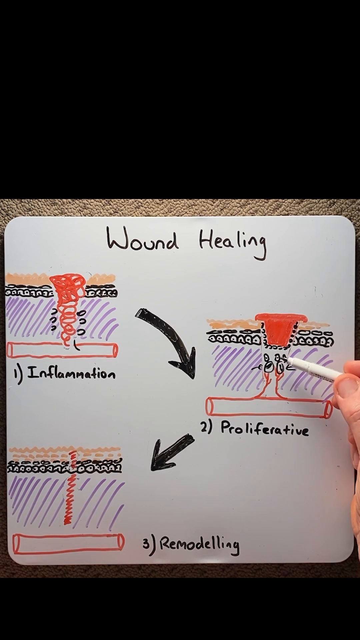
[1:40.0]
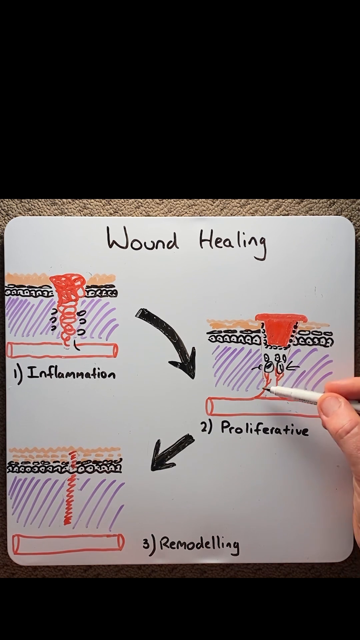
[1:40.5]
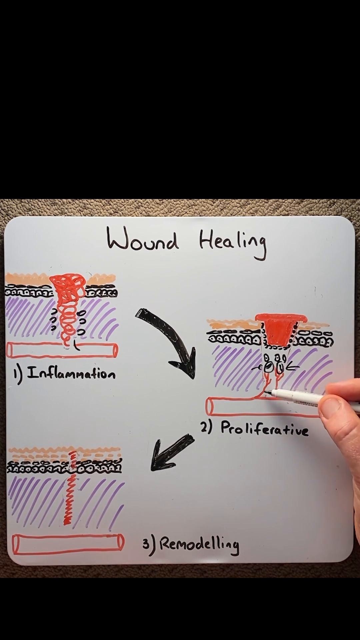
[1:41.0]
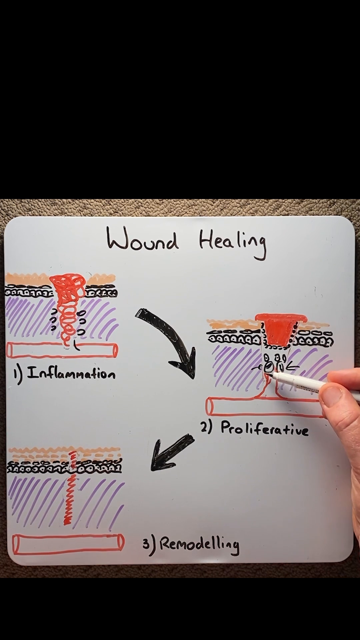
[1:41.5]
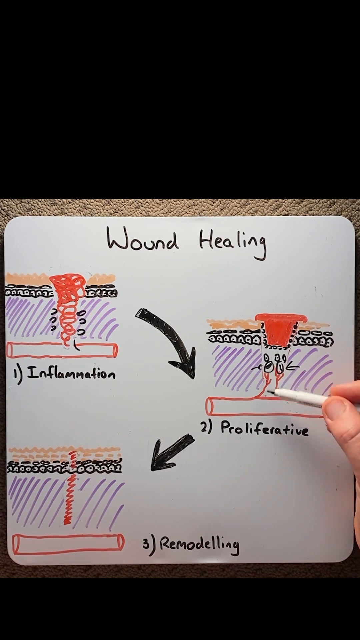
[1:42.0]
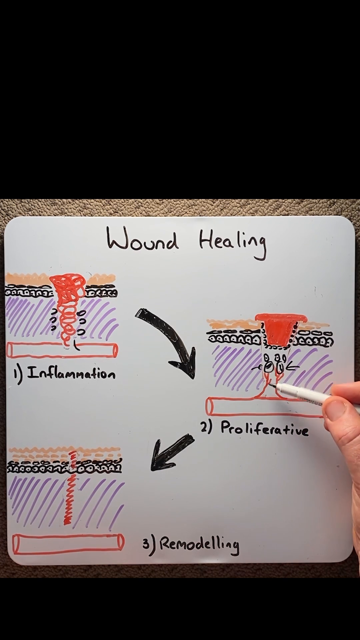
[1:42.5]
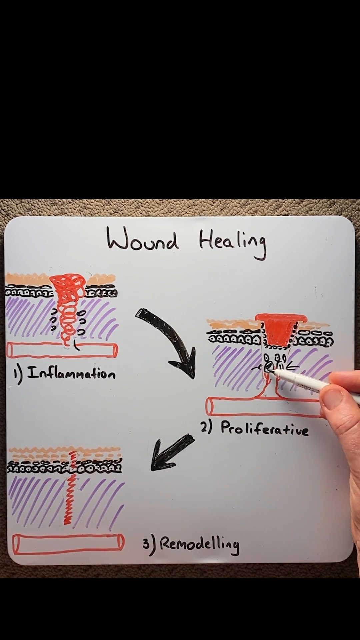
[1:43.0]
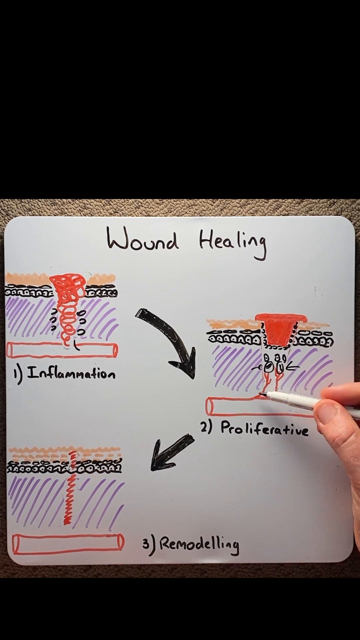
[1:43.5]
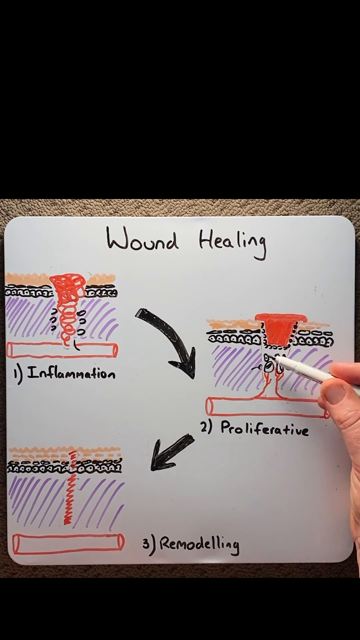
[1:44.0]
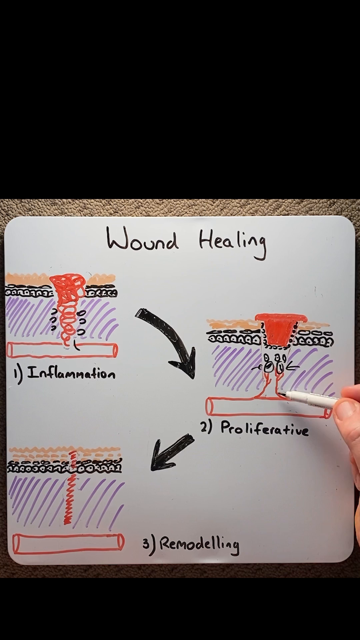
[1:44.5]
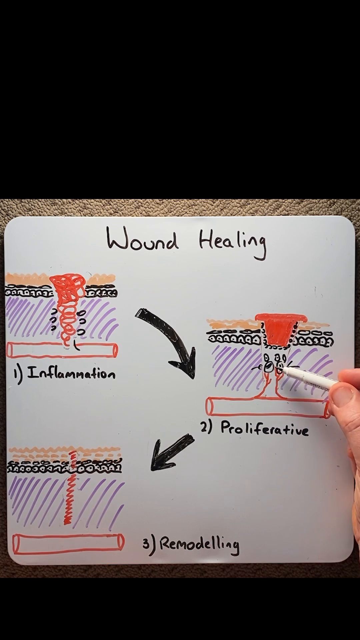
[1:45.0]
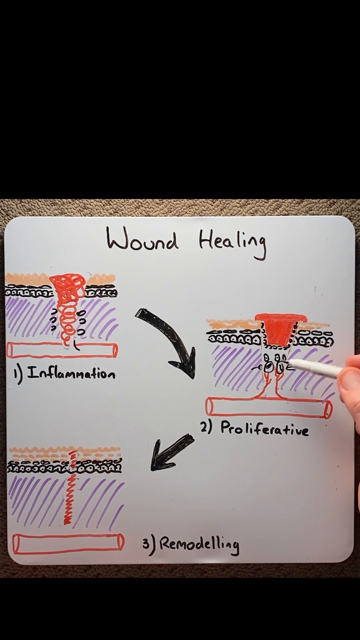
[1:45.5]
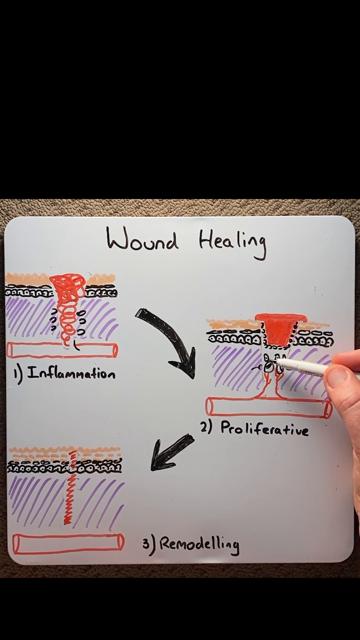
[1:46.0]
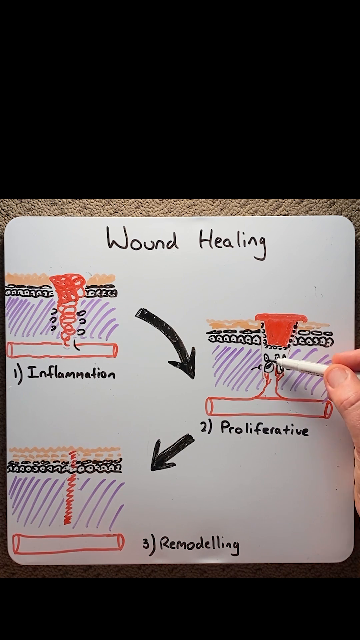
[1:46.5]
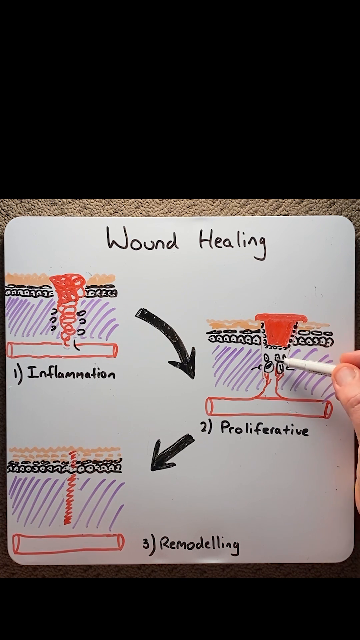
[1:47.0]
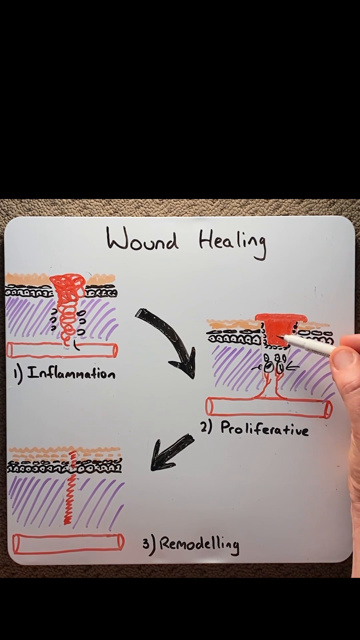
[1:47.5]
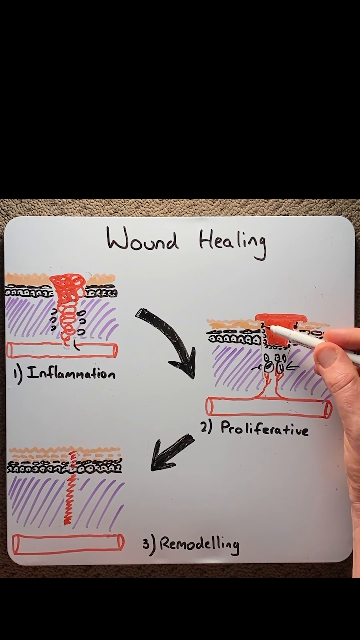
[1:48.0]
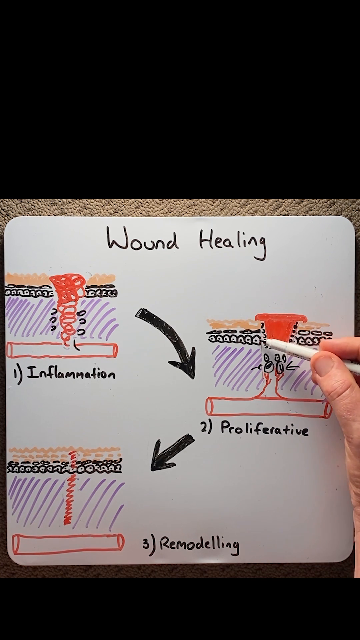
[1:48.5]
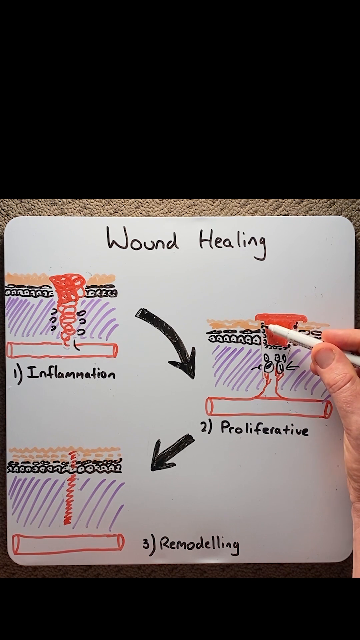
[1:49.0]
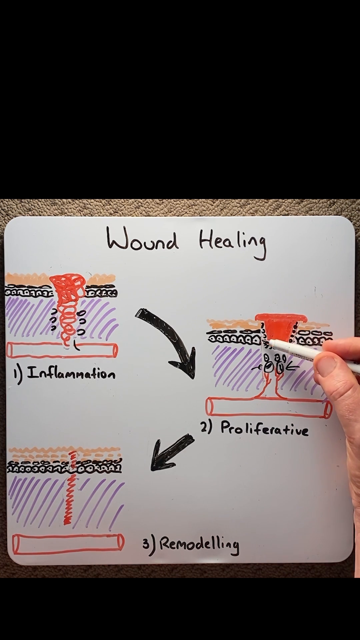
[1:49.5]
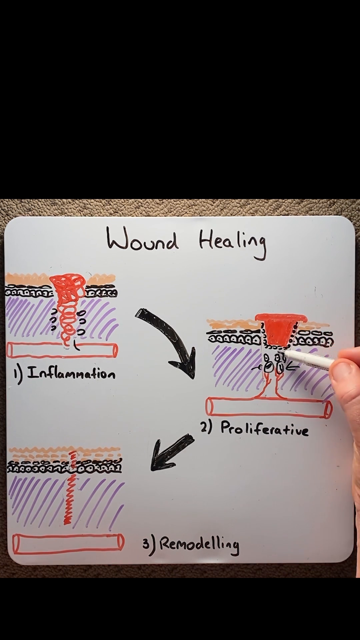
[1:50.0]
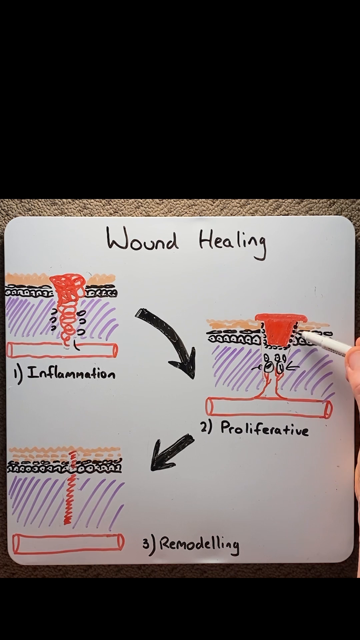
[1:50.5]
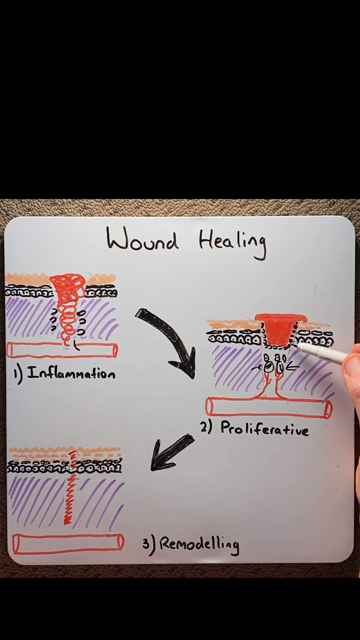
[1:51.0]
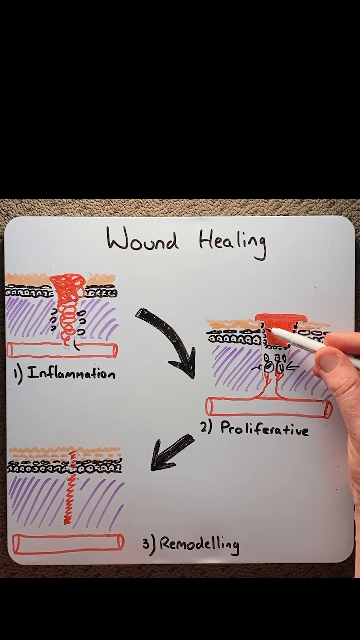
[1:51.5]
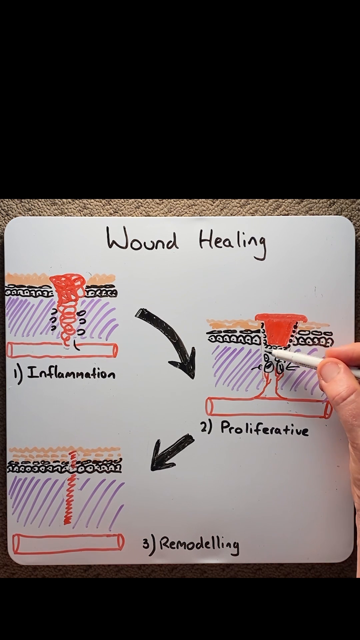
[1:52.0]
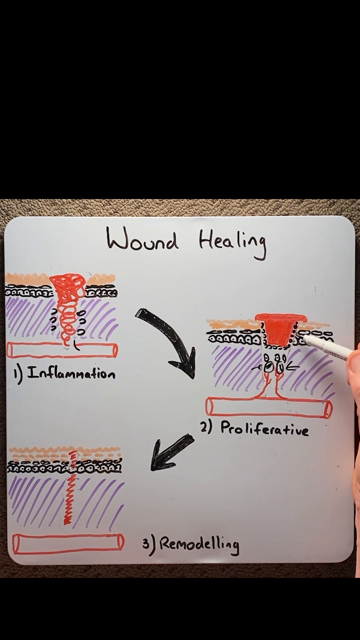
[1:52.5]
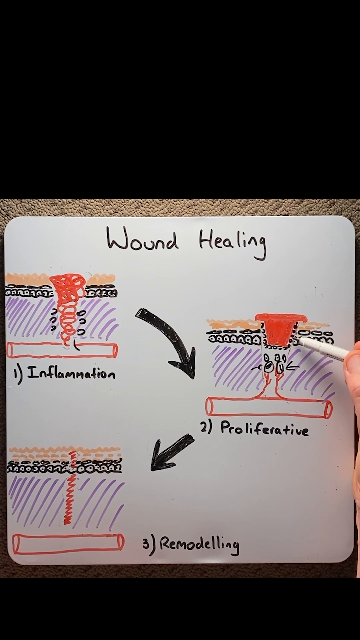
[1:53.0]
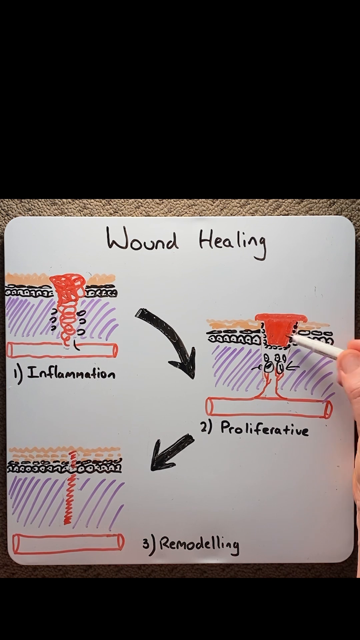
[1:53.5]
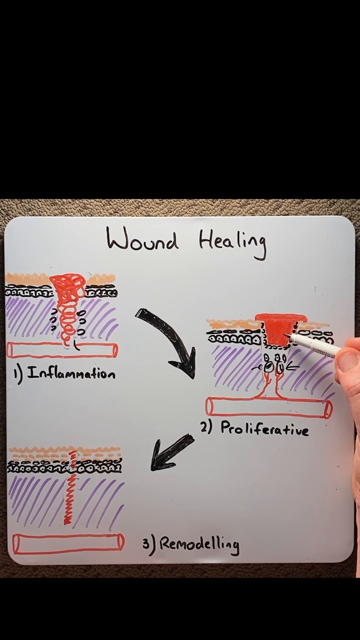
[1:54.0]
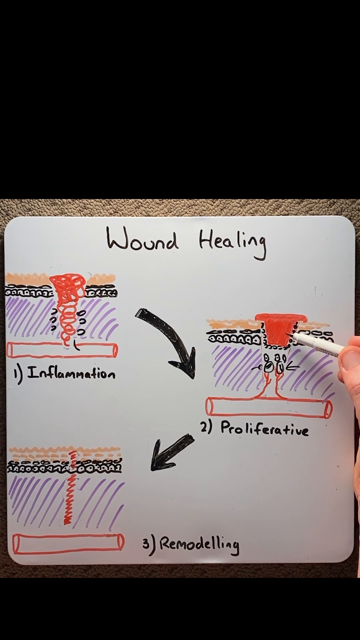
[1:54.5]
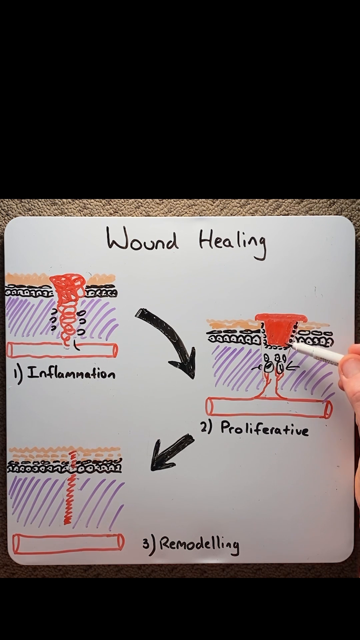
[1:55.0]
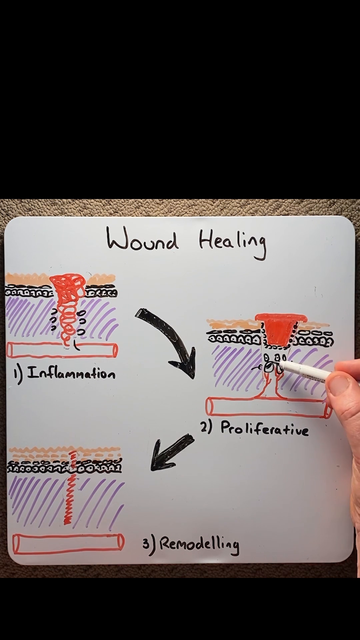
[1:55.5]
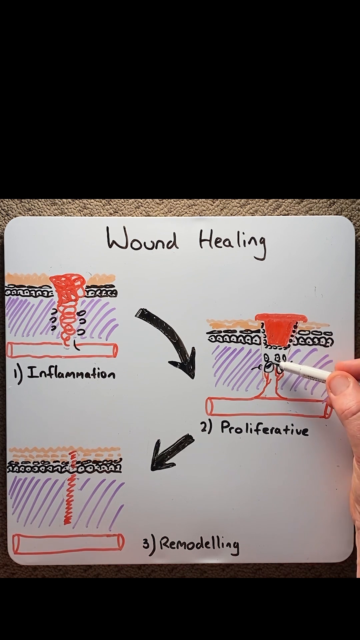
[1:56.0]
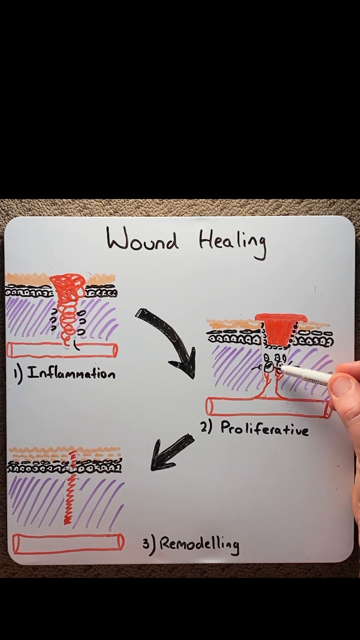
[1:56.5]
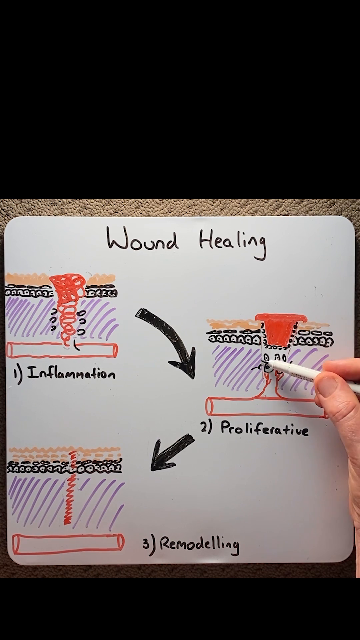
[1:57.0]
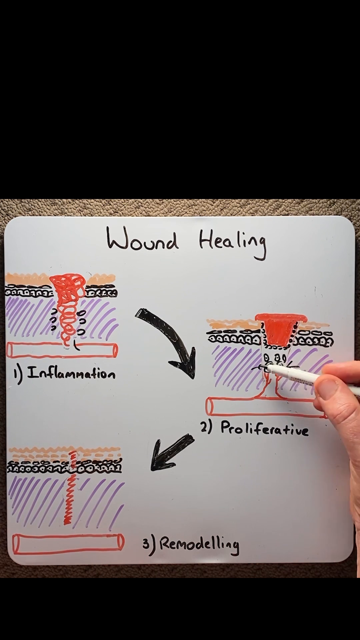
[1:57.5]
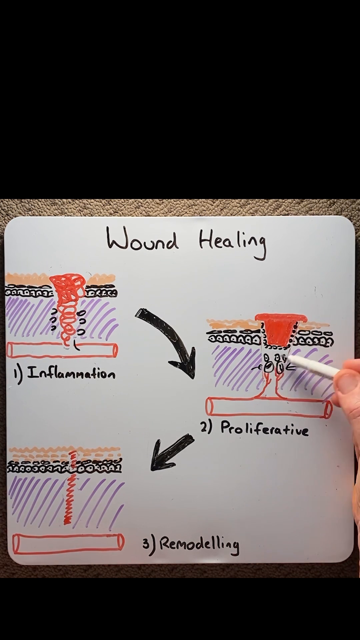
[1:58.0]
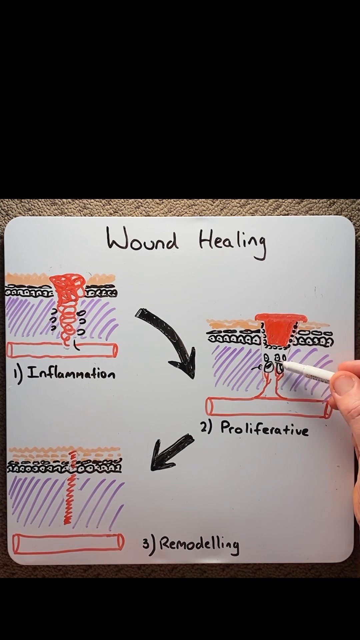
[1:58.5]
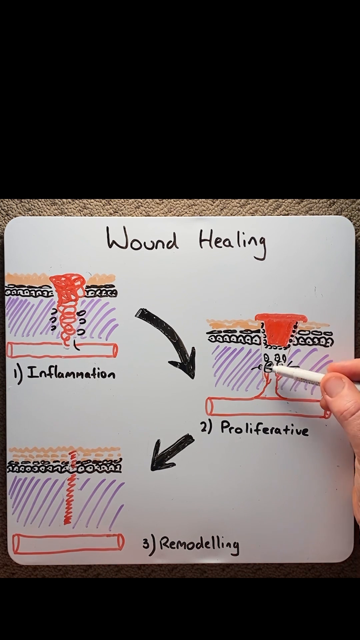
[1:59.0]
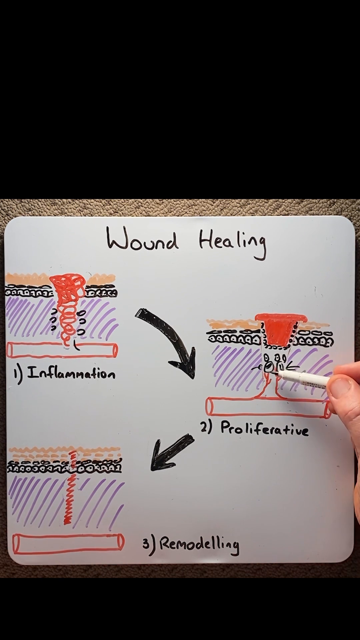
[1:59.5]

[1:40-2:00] The whiteboard explanation of wound healing shows three steps: inflammation, proliferative and remodeling. At step two, the man points to the proliferative model and appears to be drawing blood cells, seemingly showing how they help heal the wound. Everything is drawn in different colored markers: red, purple, black and a beige-ish color. At the top of the board it says "wound healing," and each step has an arrow pointing to the next in sequential order. In point-of-view style, only the man's hands are seen, and carpet is visible behind the whiteboard, so it was done on the floor. He has rather chunky hands and is possibly in his late thirties to early forties.